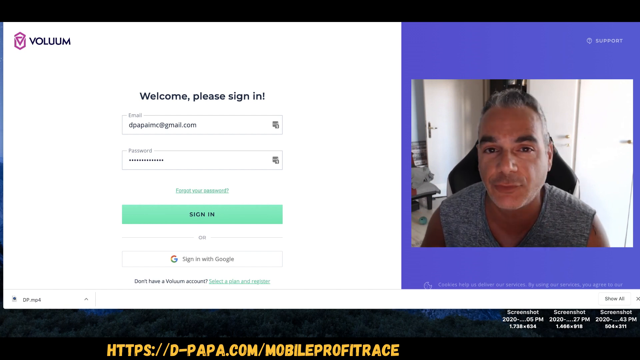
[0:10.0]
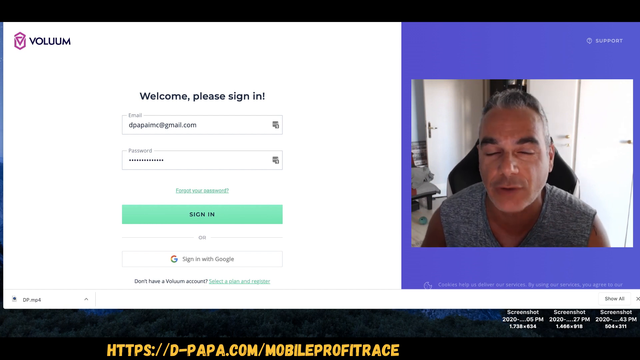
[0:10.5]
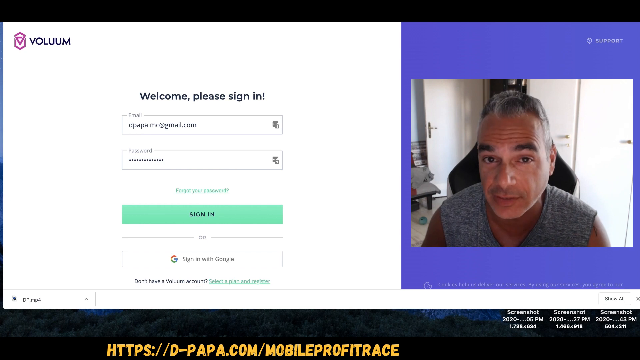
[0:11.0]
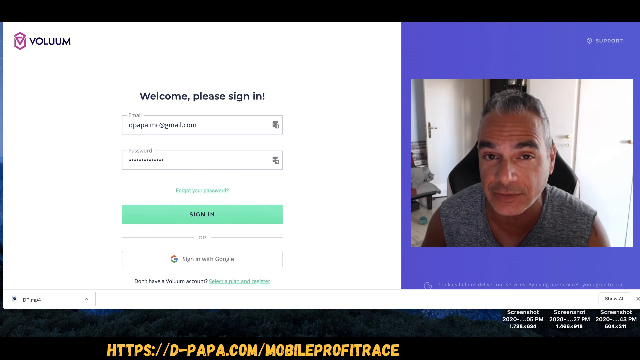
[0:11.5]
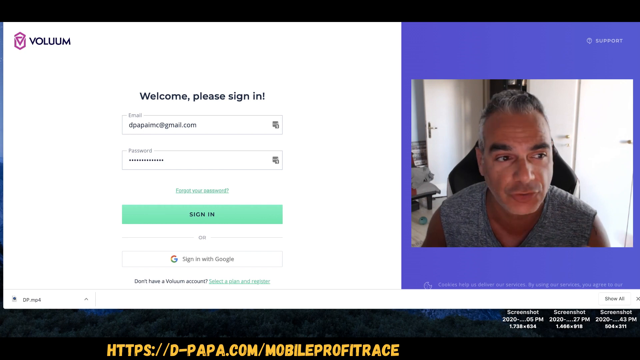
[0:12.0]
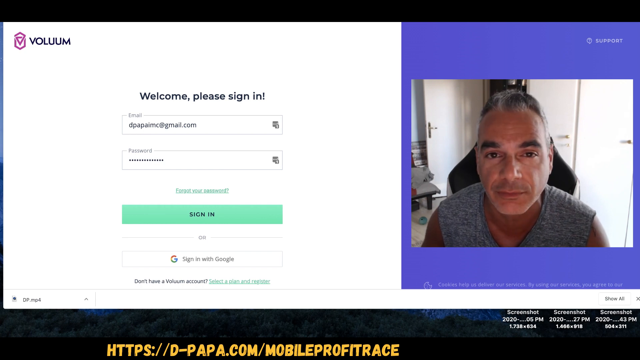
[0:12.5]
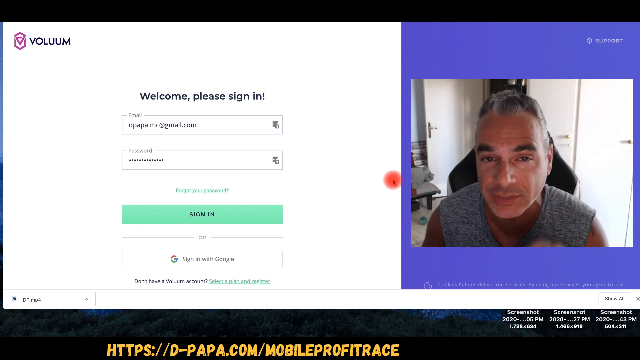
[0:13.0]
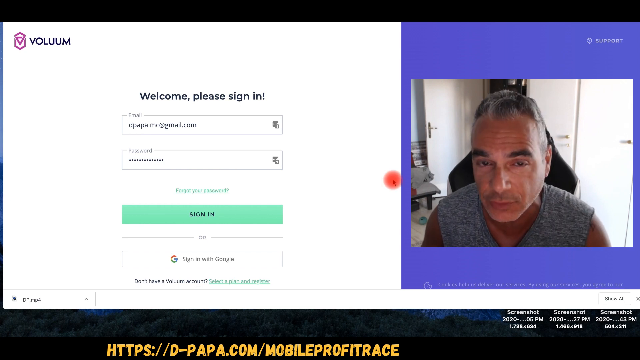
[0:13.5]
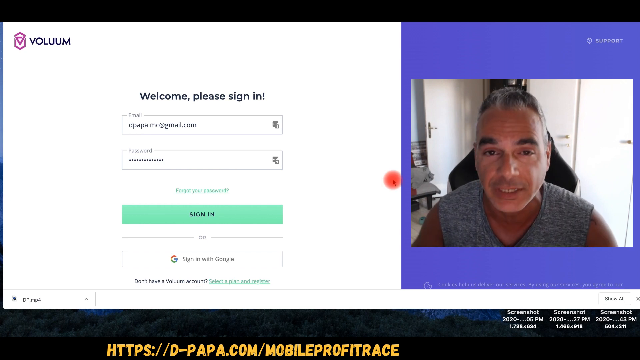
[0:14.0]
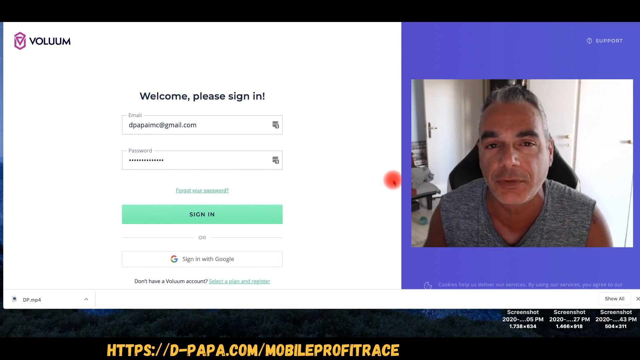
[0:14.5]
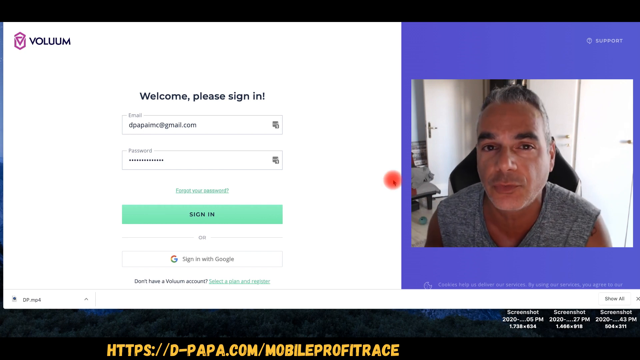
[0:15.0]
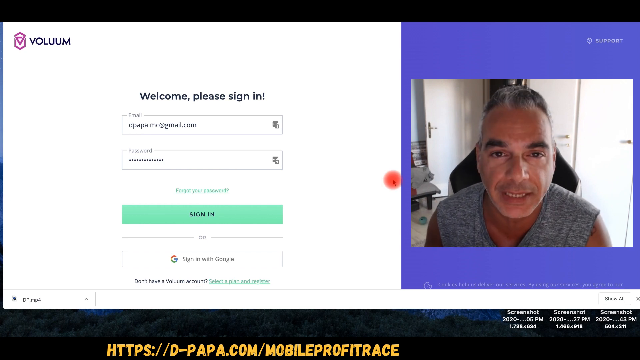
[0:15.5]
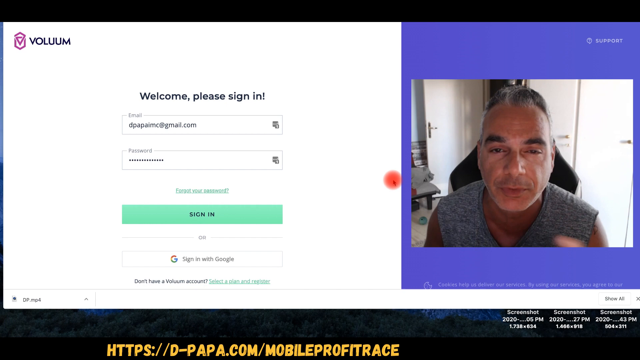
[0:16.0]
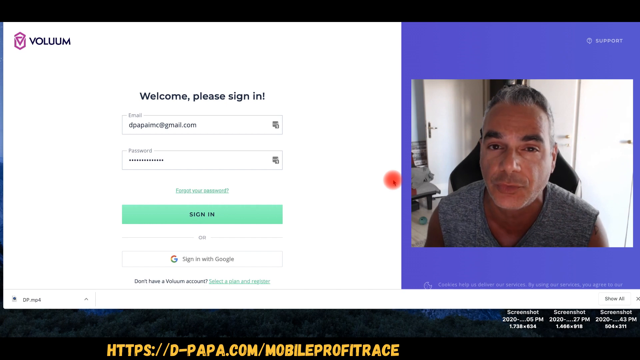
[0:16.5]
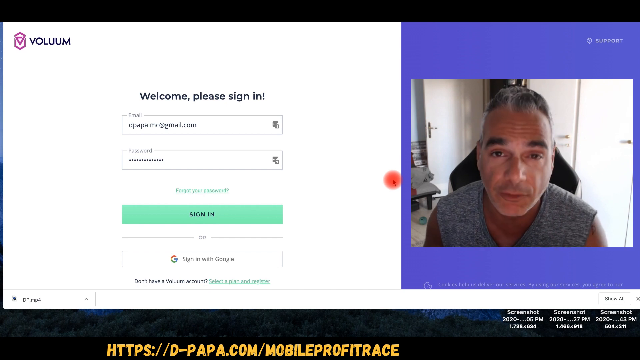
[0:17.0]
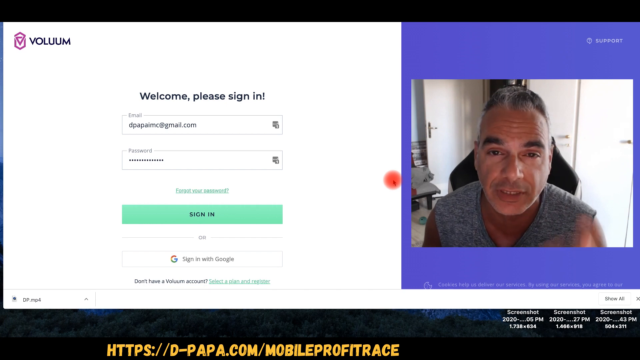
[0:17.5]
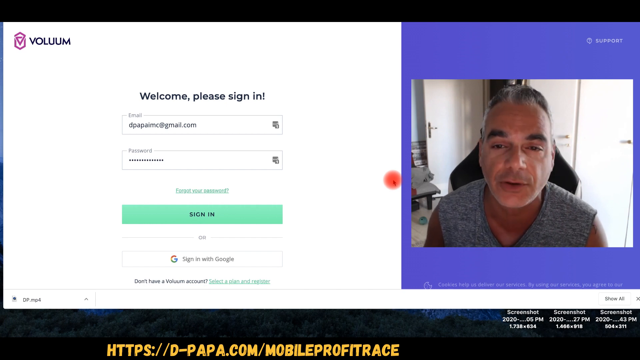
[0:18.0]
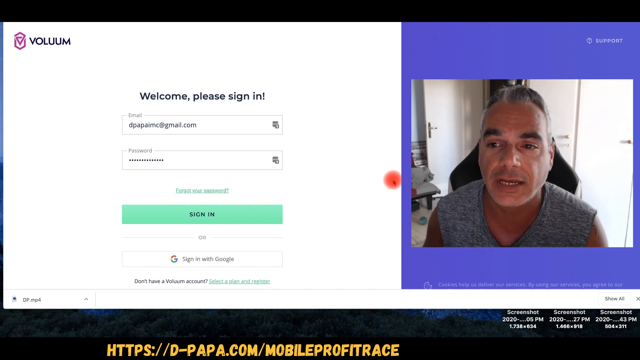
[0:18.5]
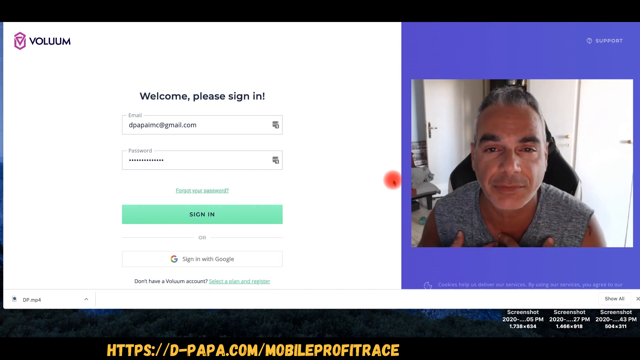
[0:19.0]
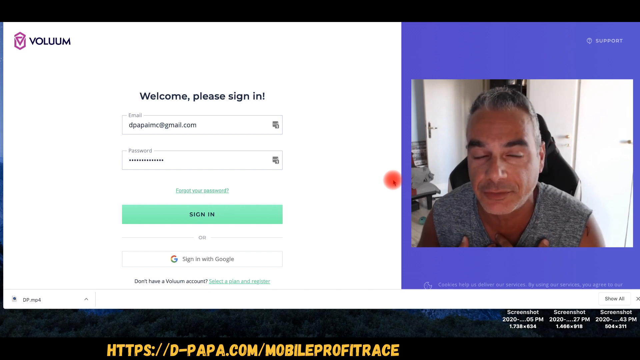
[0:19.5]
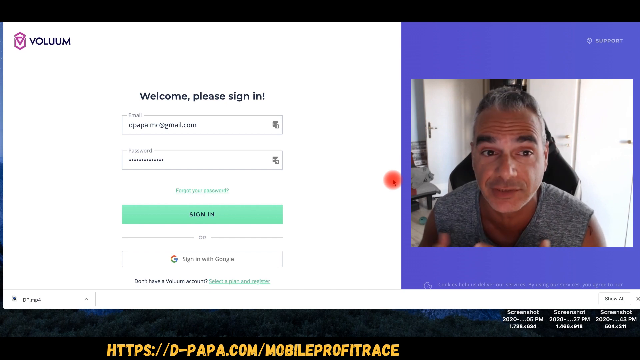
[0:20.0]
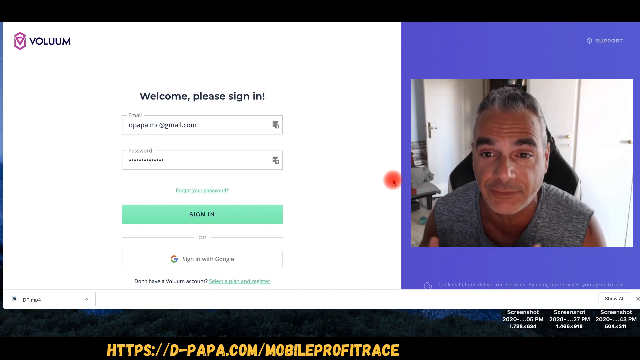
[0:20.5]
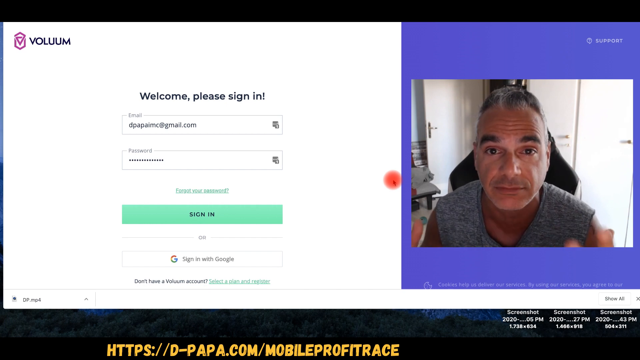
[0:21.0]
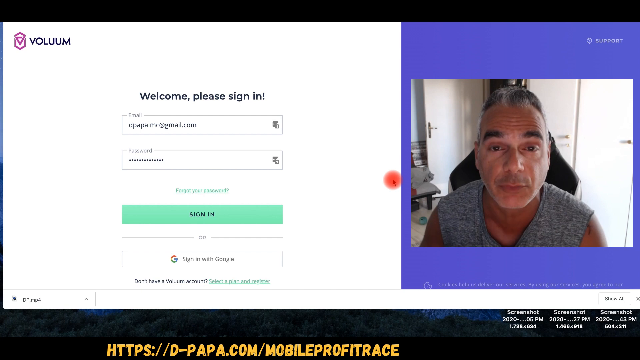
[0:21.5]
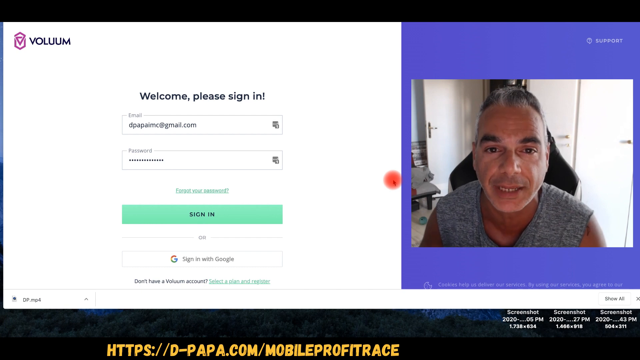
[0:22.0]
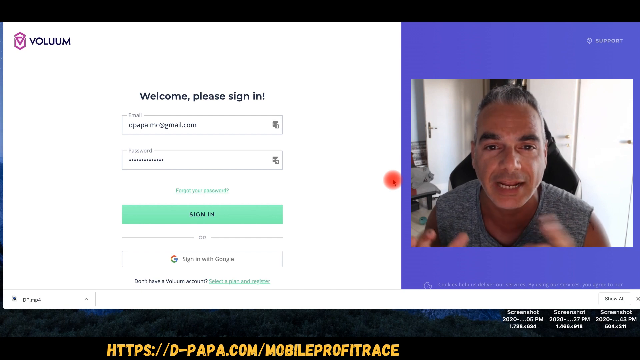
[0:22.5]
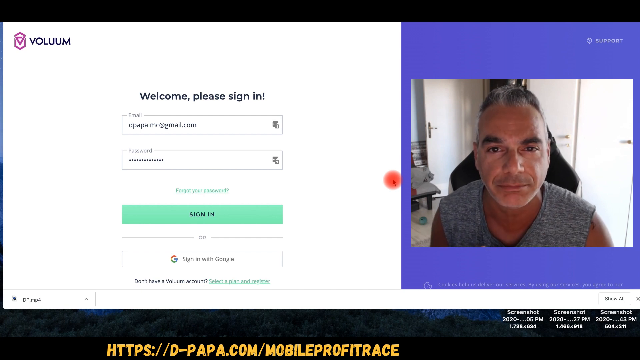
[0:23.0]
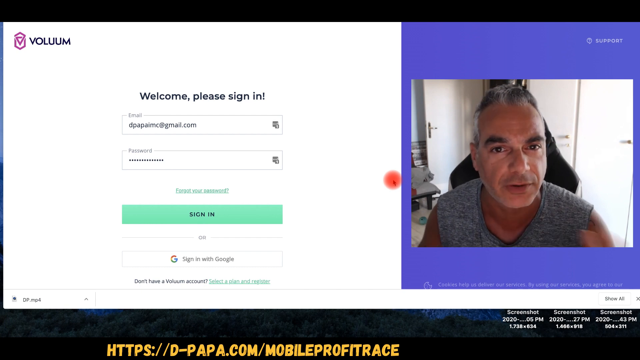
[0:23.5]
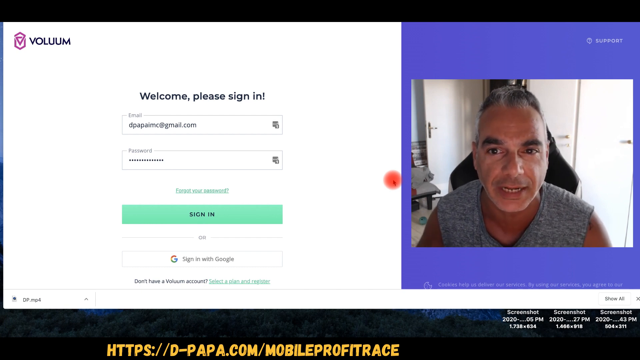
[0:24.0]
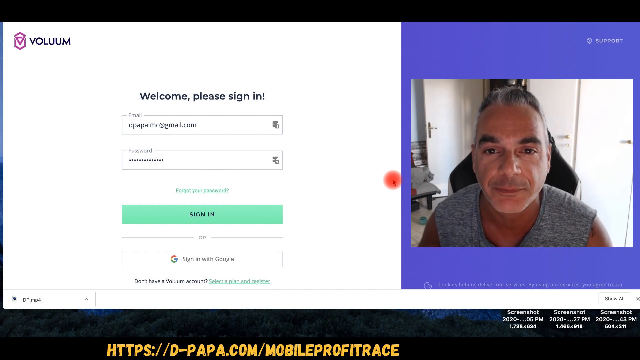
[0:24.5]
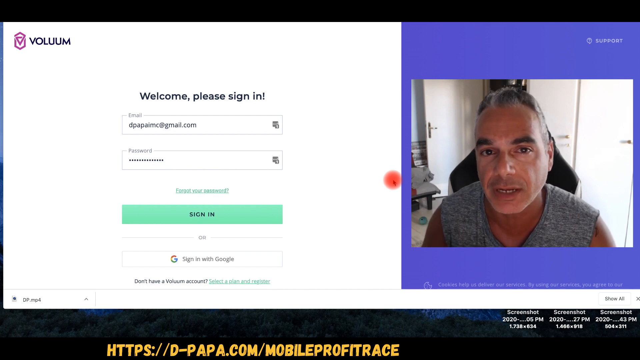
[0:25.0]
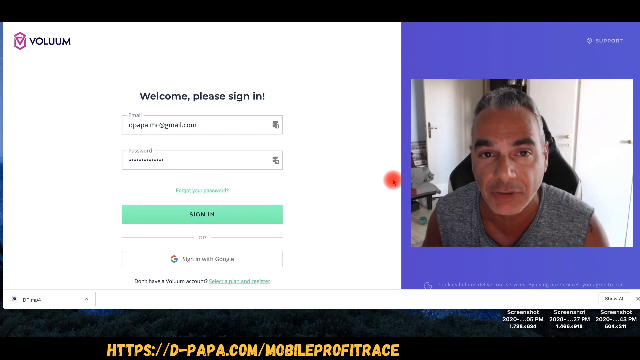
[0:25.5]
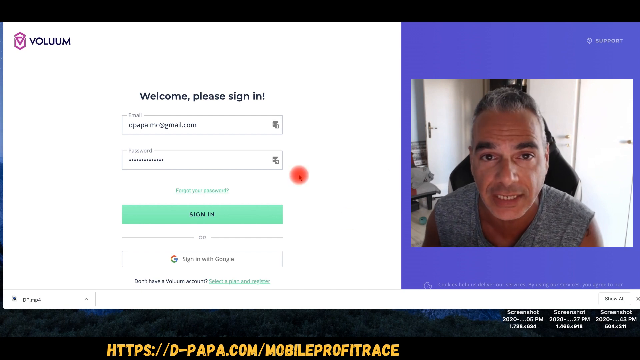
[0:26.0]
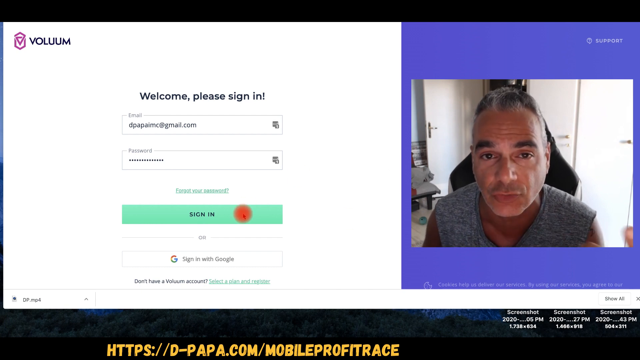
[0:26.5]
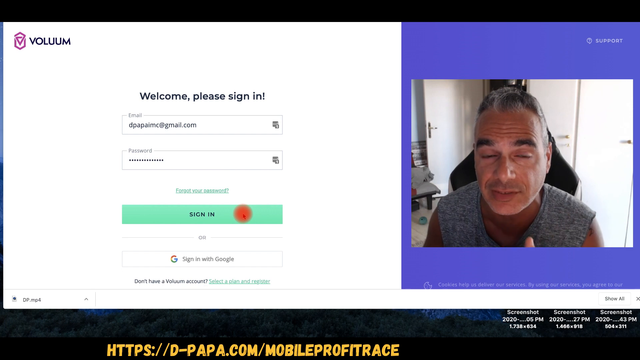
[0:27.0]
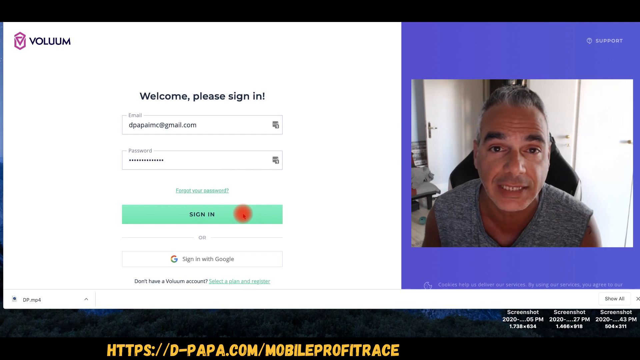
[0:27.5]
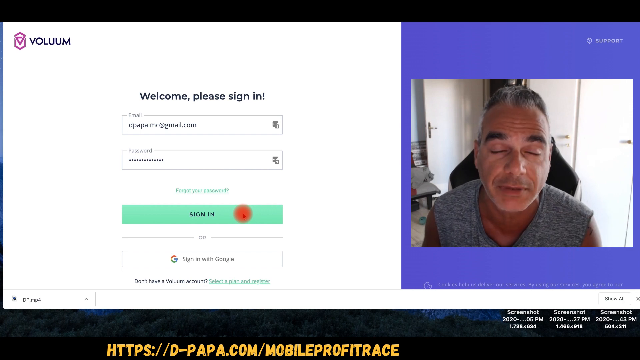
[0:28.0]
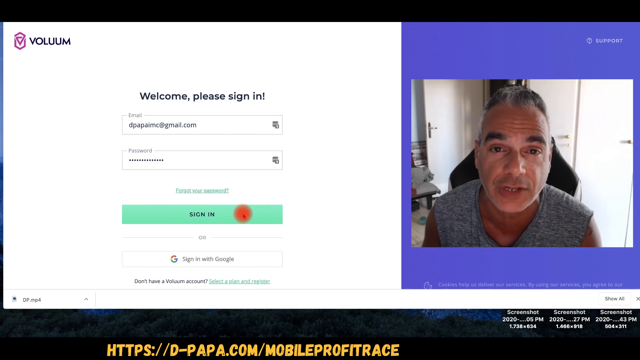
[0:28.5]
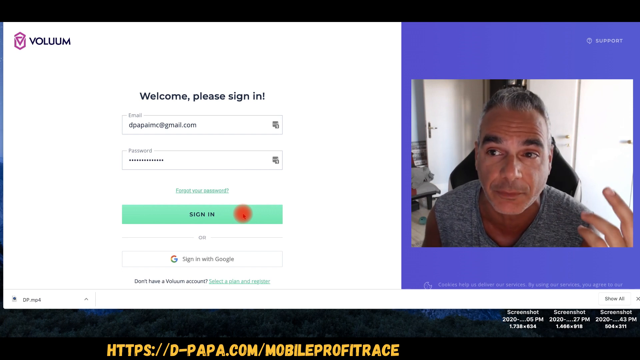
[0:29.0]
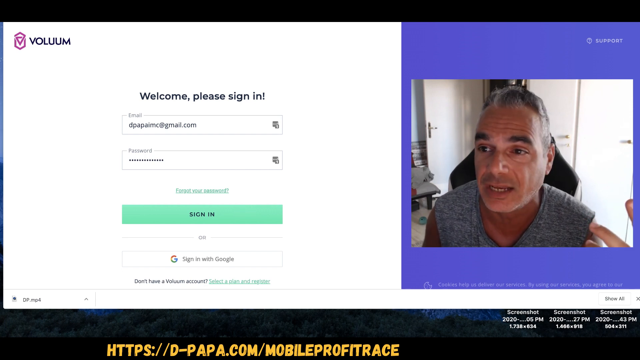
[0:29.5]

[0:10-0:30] The split screen shows, on the left two-thirds, a login page for a company or software called Volume, with a white background and the Volume logo in the top left-hand corner. The words "welcome, please sign in!" appear in a bold black font with an exclamation mark at the end. Below is a light gray text box with small wording, "email", along its top line, and an email address already input. Underneath is a password field with an entered password obscured by stars. On the right-hand side is a video of a man talking to the camera and gesticulating with his hands. He keeps putting his fingertips together and then waves his hand, which comes in at the bottom of the screen. A red dot appears to indicate where his cursor is. He carries on talking, places his fingertips onto his chest, then moves them out again, raising his palms up toward the ceiling. The red dot then bounces onto the sign-in button and stays there.